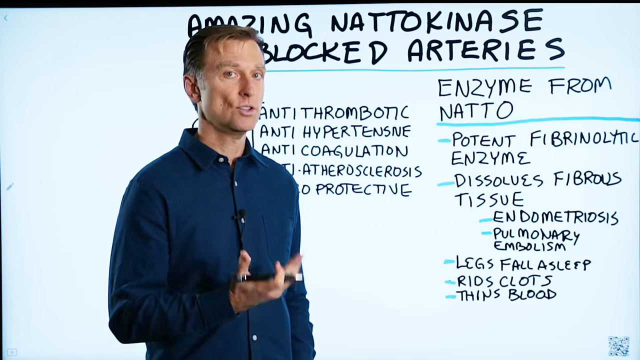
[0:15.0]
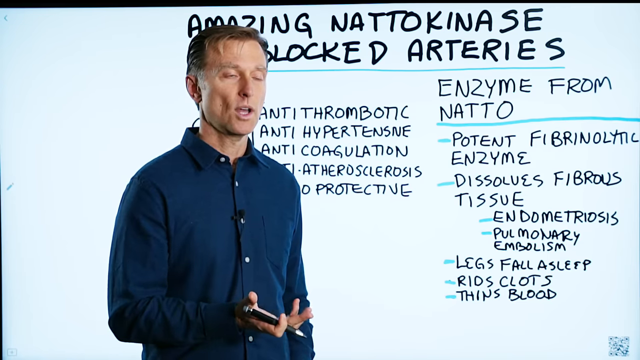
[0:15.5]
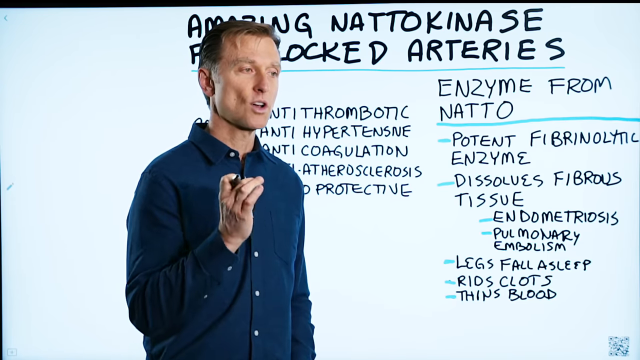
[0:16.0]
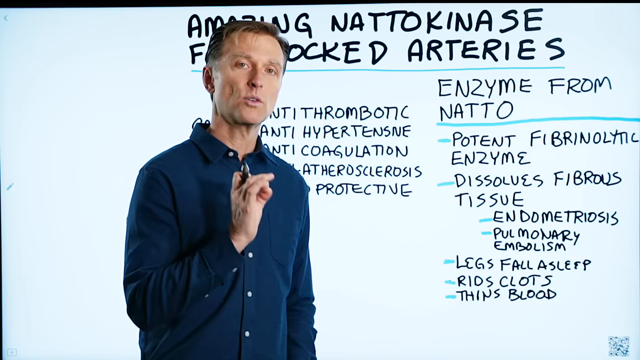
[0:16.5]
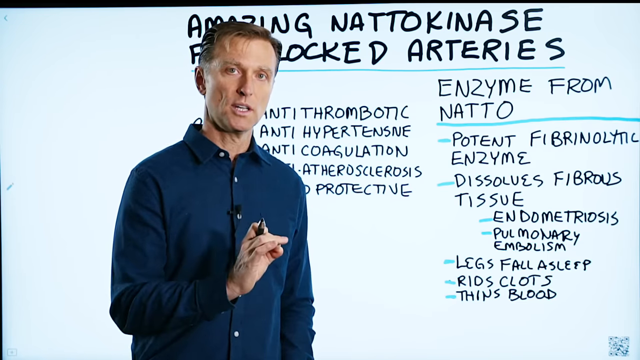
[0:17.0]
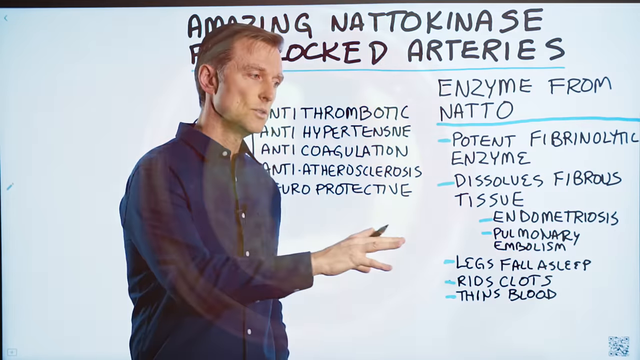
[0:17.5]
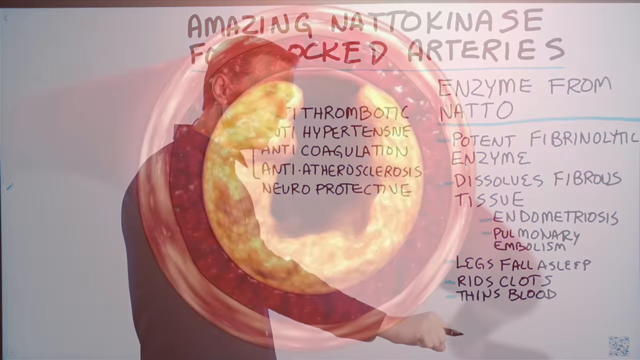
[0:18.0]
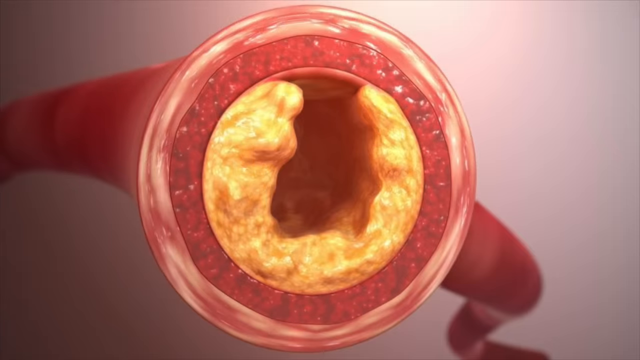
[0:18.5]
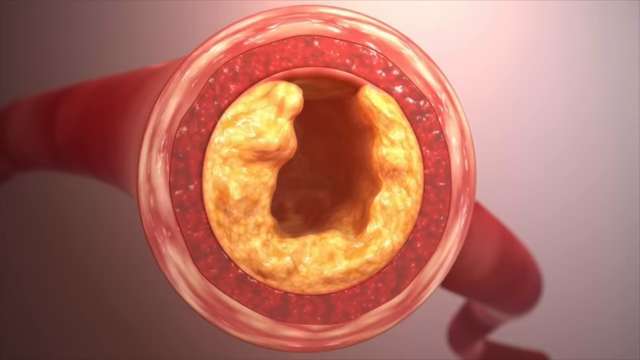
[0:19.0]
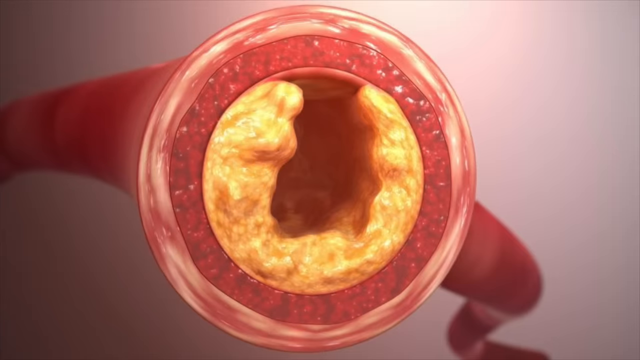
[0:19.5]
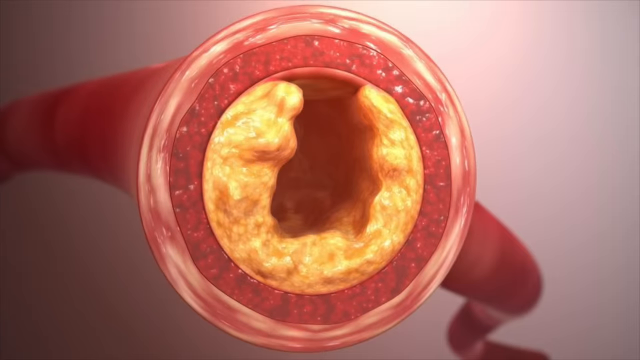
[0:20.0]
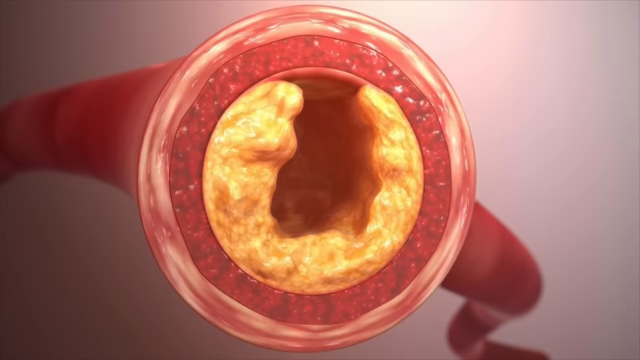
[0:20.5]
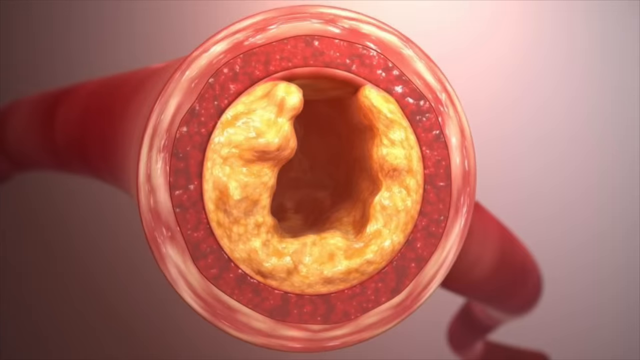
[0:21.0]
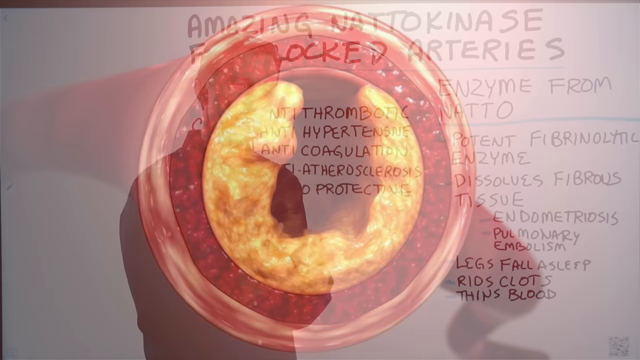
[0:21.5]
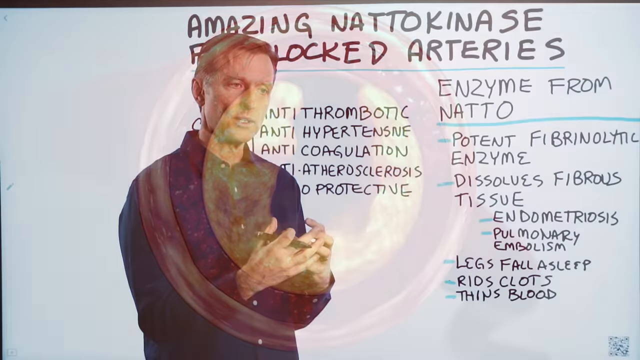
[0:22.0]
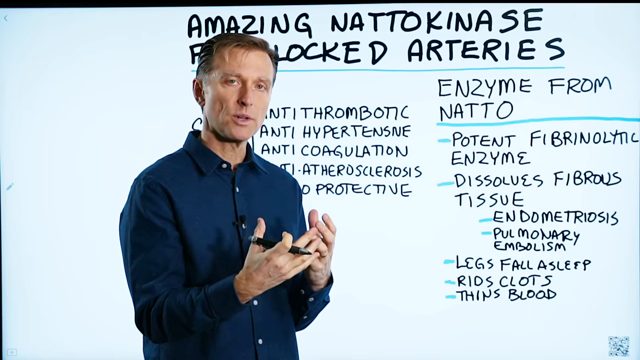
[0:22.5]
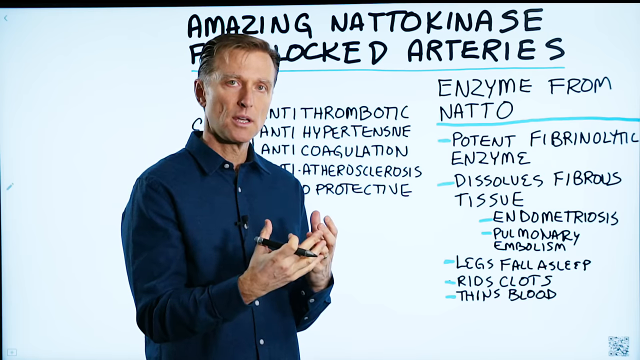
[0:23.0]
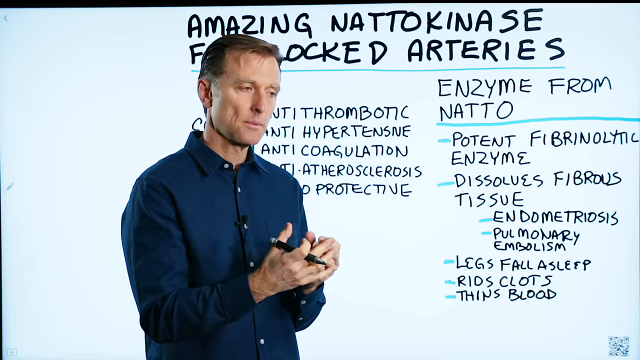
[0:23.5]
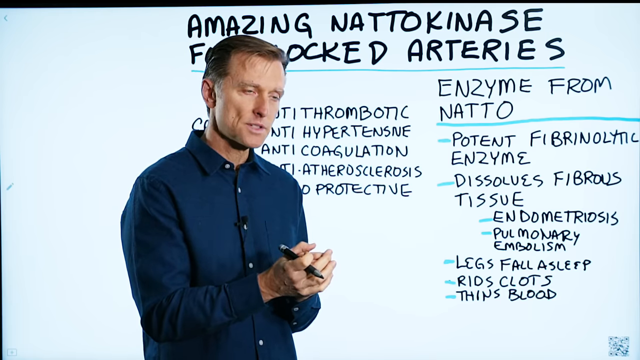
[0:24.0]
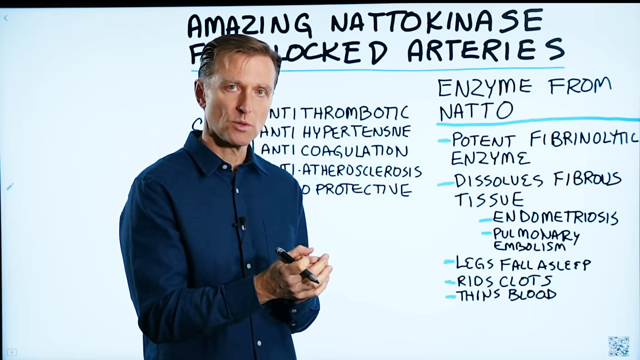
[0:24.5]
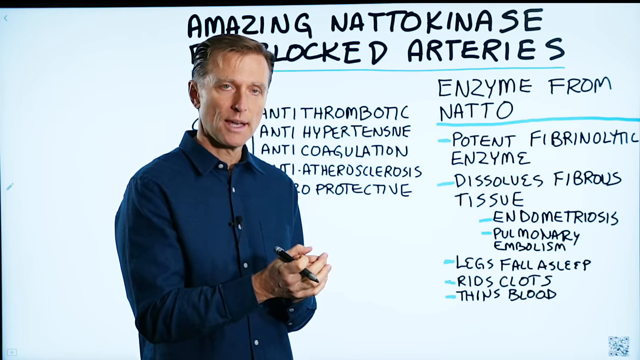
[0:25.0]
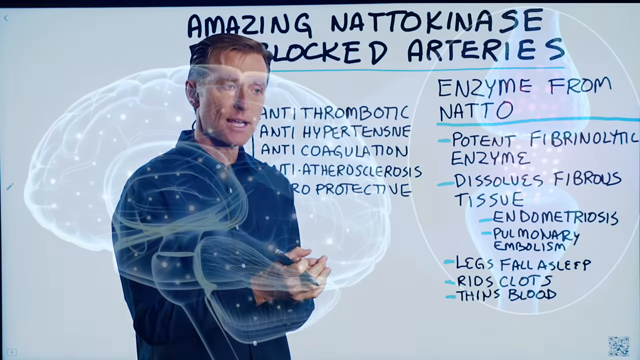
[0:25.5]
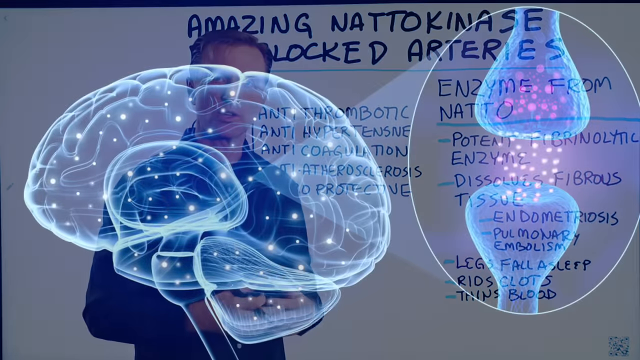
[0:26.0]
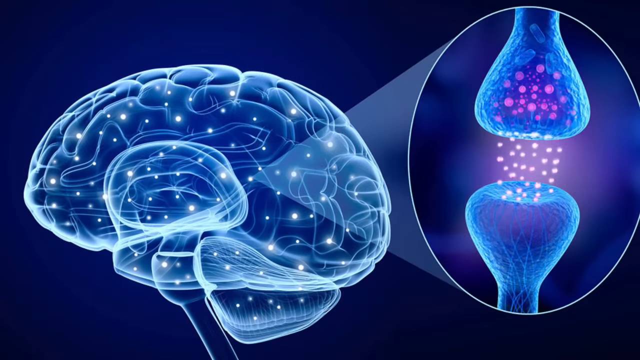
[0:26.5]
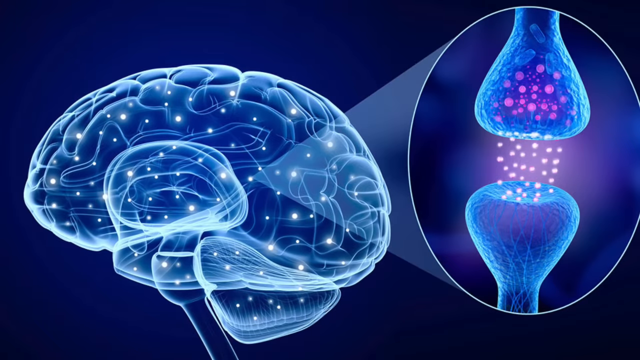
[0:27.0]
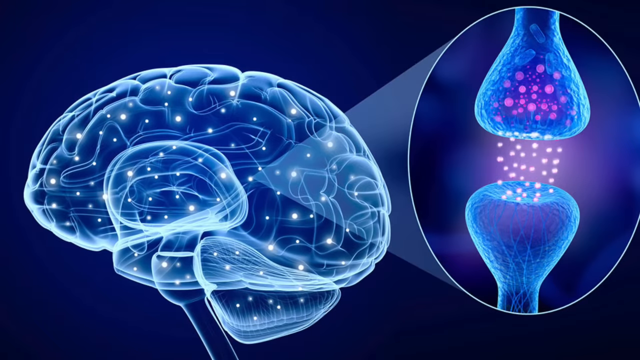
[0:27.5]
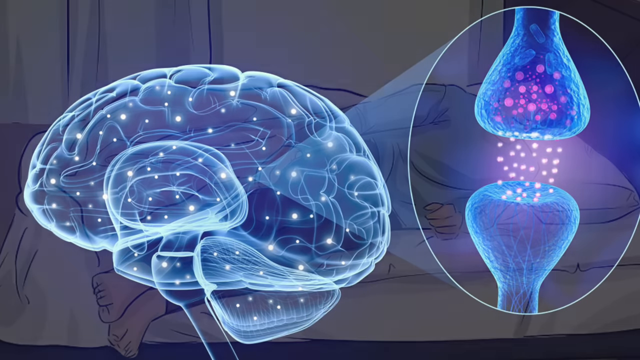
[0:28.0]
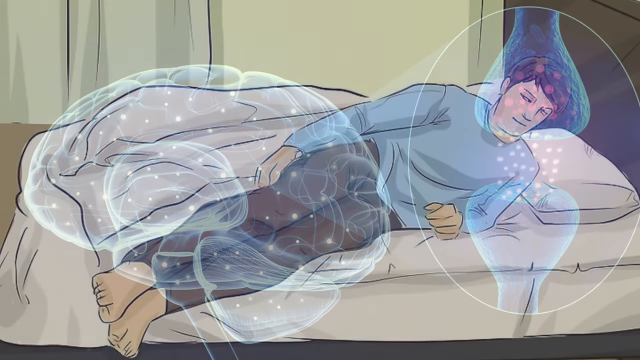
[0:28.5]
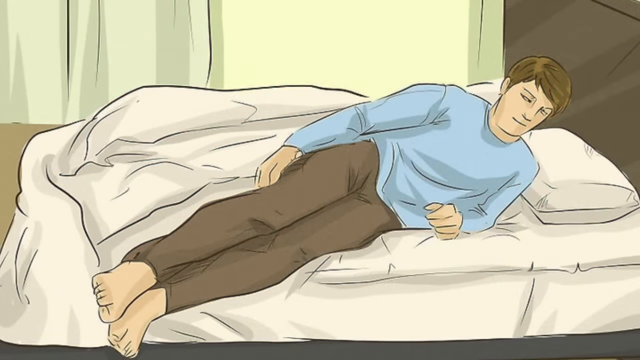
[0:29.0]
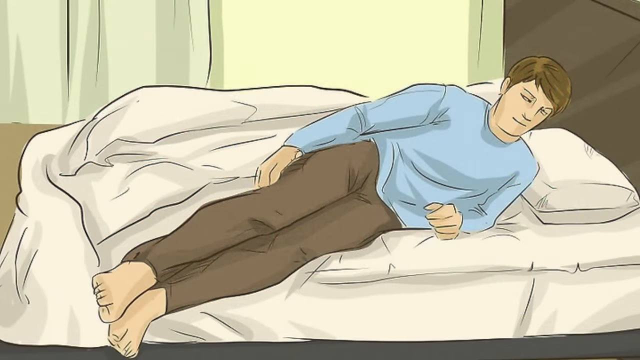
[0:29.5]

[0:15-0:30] The white man in the blue shirt stands in front of the whiteboard, which has writing on it. An image of a clogged artery appears, followed by more images of the clogged artery. He is promoting the benefits of netokinase, which is apparently found in a bean. An image of a brain shows what are possibly neurotransmissions. The video switches back and forth between the man at the whiteboard, a clip of a brain, and a cartoon man lying on a bed whose leg hurts, probably from deep vein thrombosis. The phrases "amazing effect on blocked arteries" and "enzyme from NATO" appear.